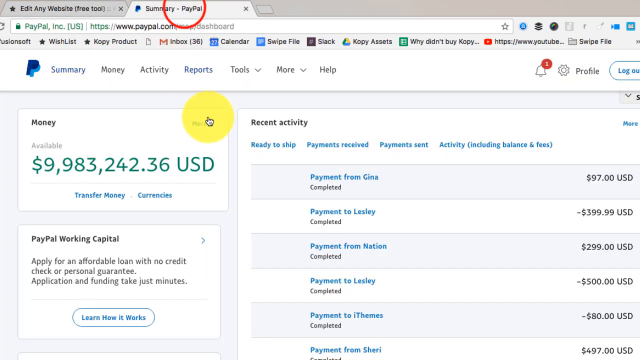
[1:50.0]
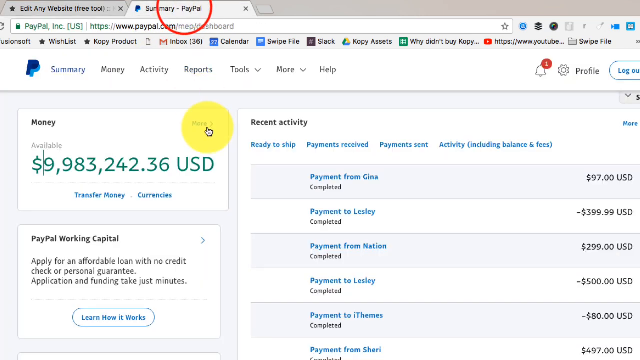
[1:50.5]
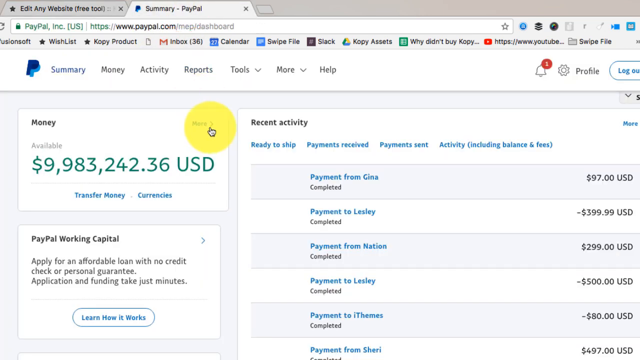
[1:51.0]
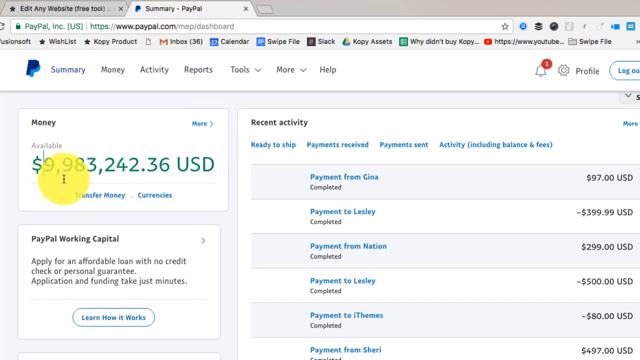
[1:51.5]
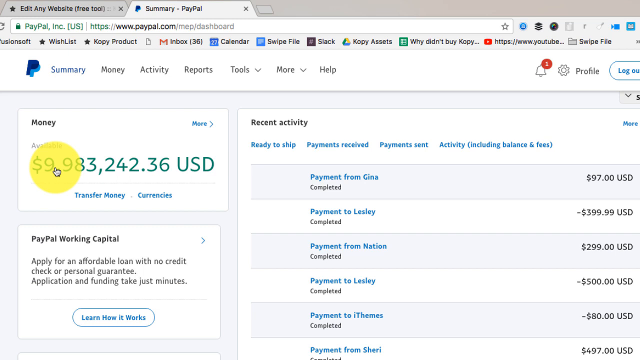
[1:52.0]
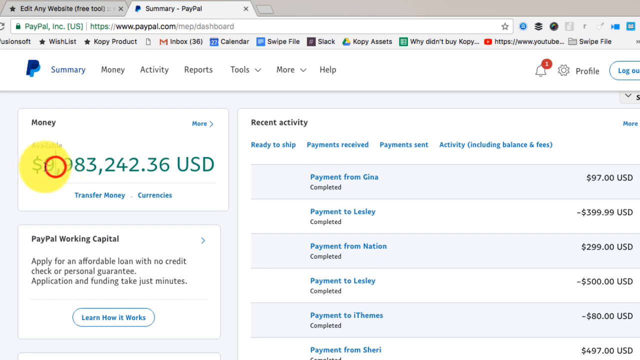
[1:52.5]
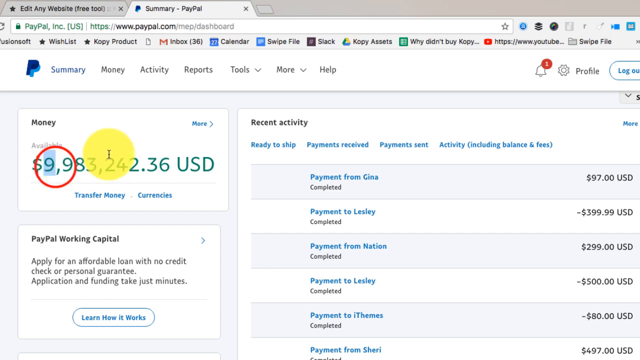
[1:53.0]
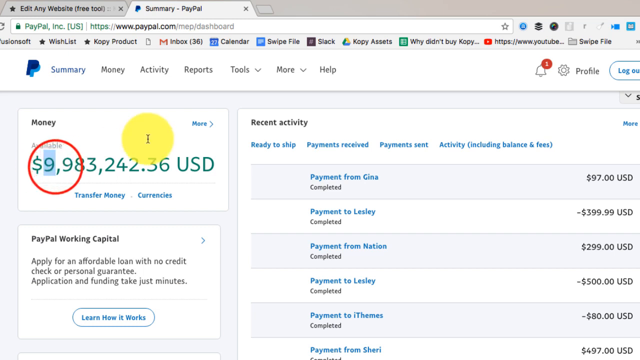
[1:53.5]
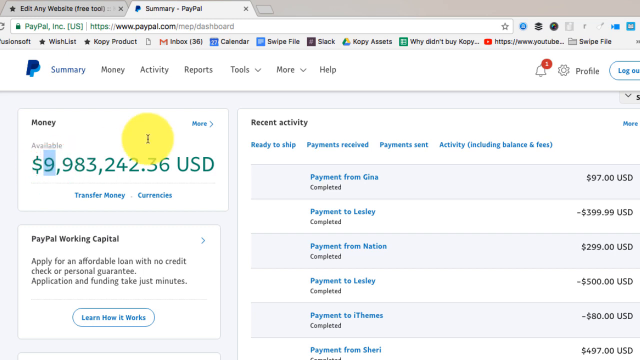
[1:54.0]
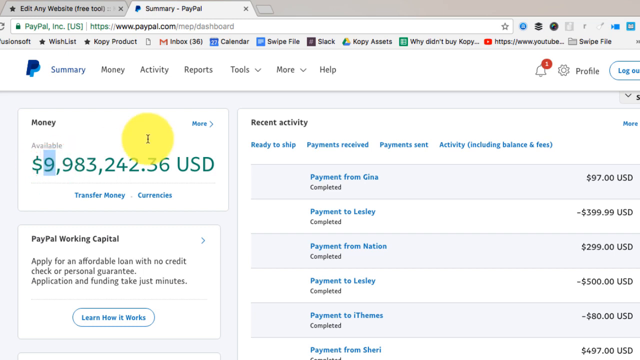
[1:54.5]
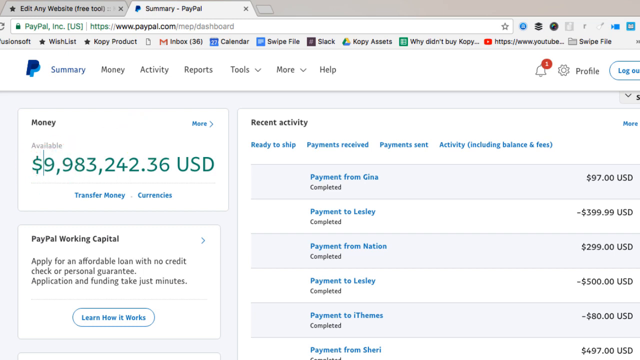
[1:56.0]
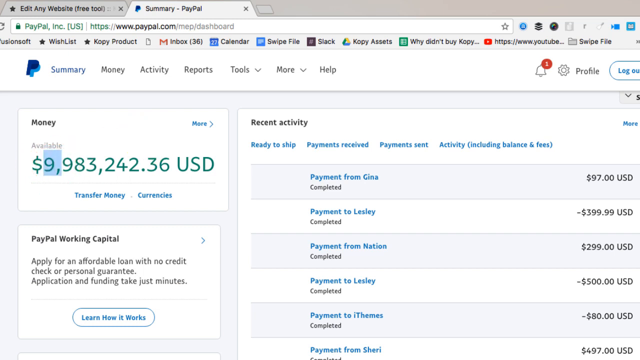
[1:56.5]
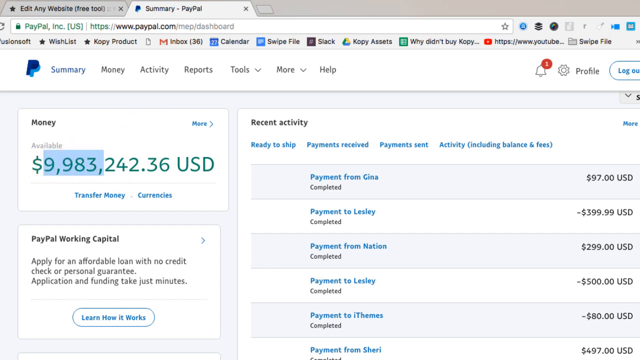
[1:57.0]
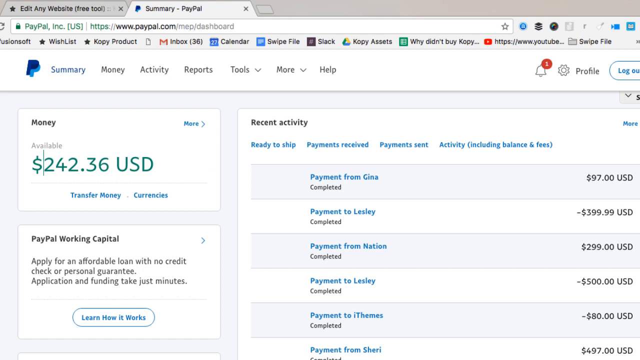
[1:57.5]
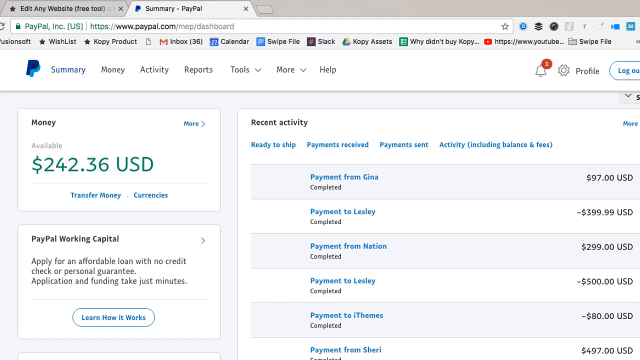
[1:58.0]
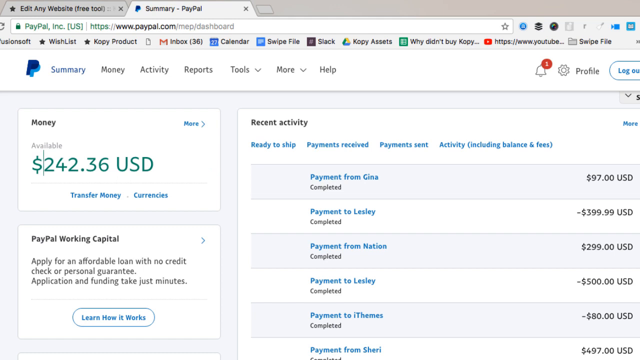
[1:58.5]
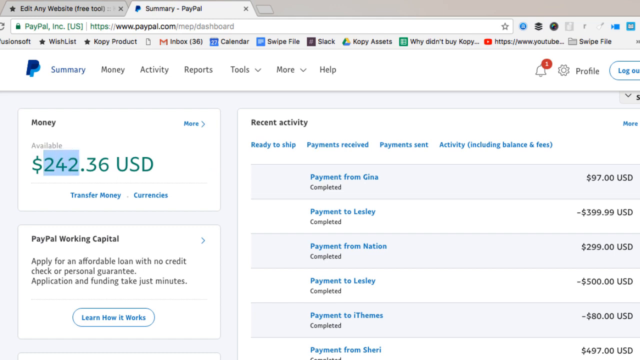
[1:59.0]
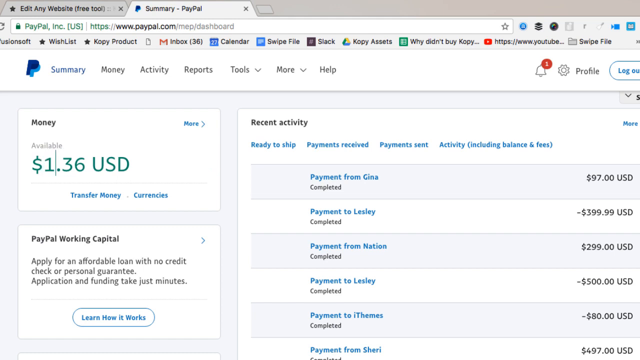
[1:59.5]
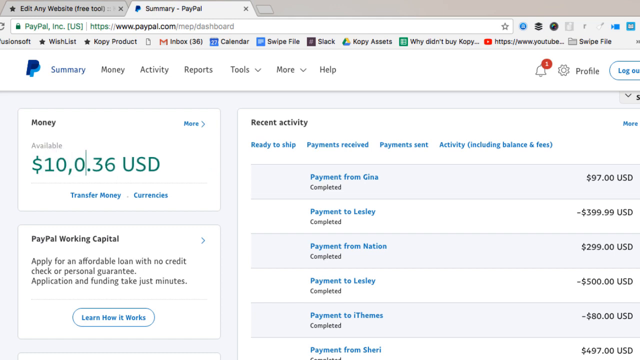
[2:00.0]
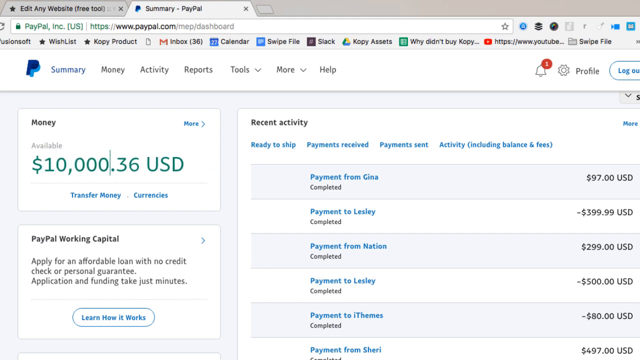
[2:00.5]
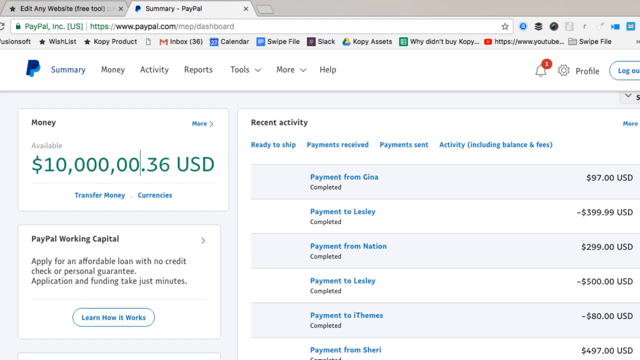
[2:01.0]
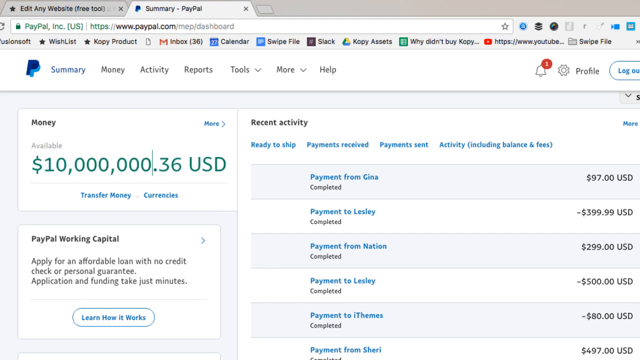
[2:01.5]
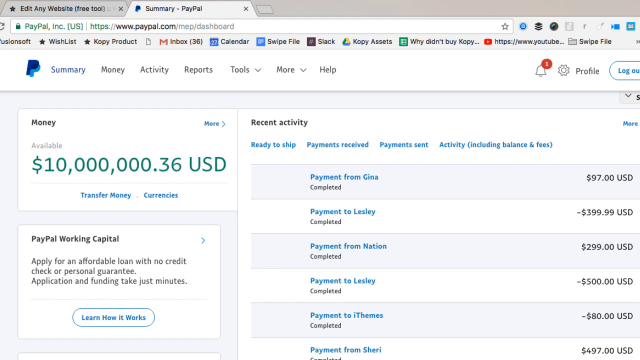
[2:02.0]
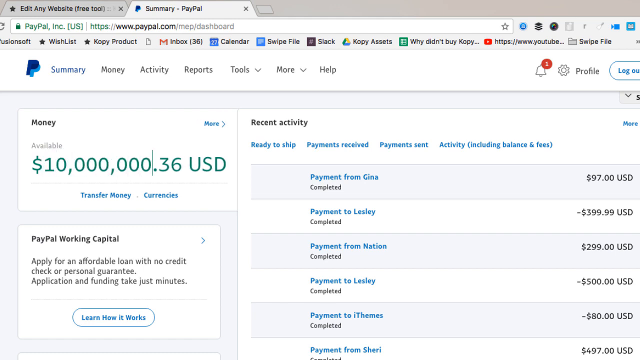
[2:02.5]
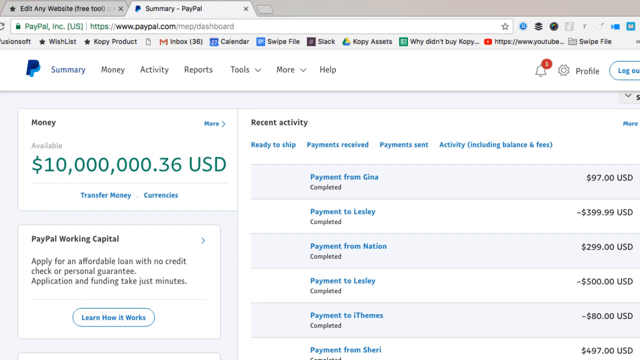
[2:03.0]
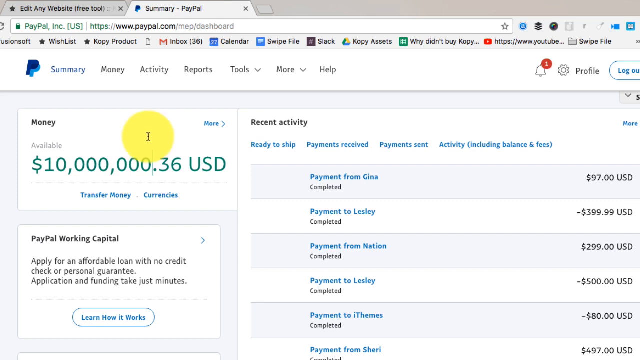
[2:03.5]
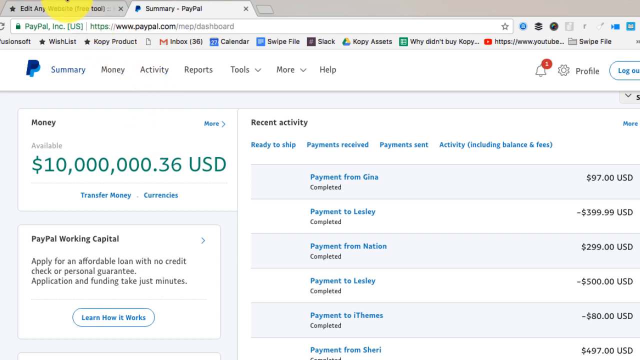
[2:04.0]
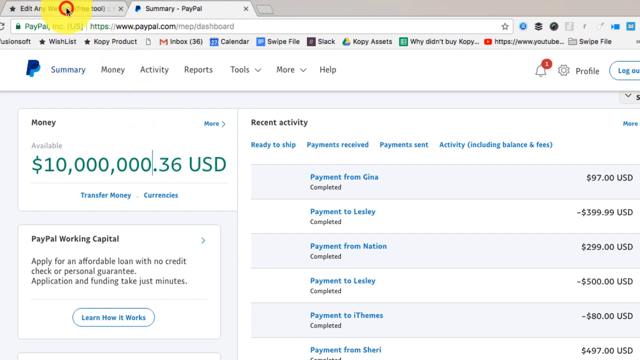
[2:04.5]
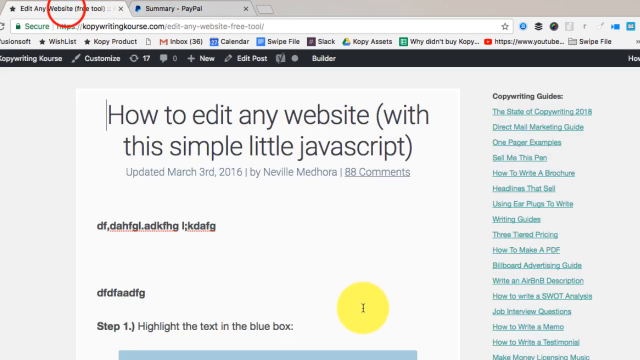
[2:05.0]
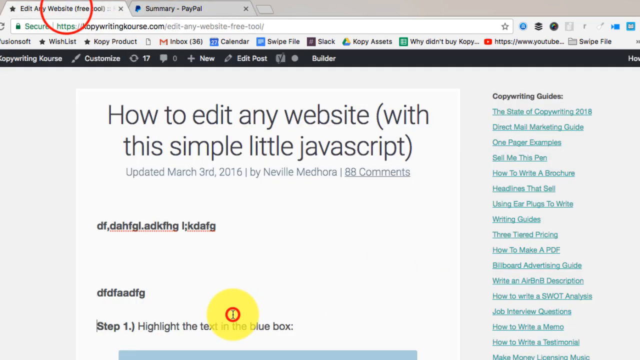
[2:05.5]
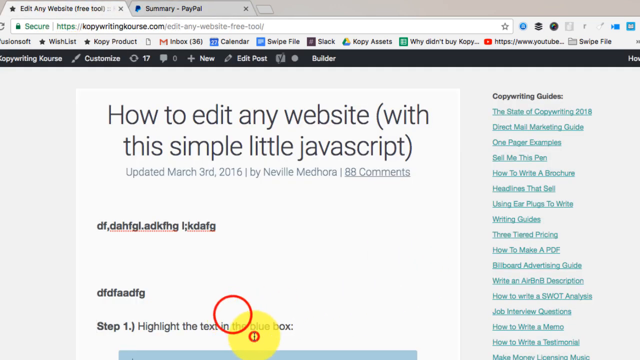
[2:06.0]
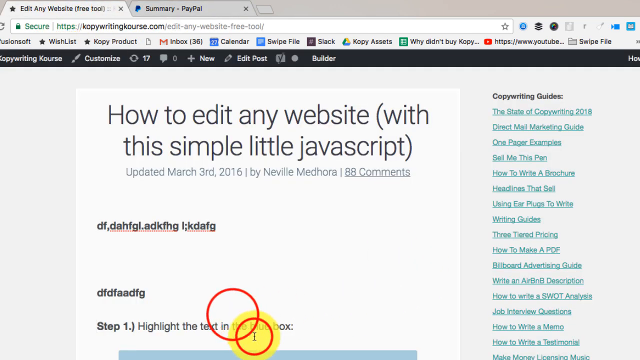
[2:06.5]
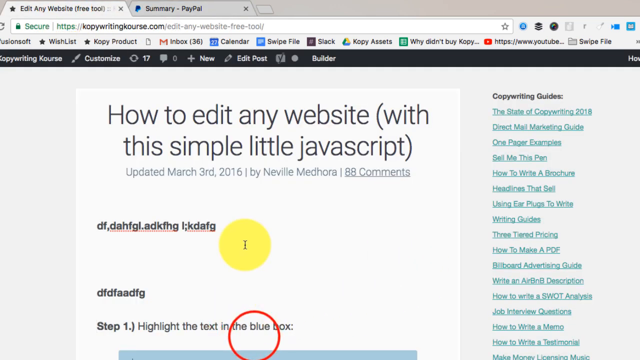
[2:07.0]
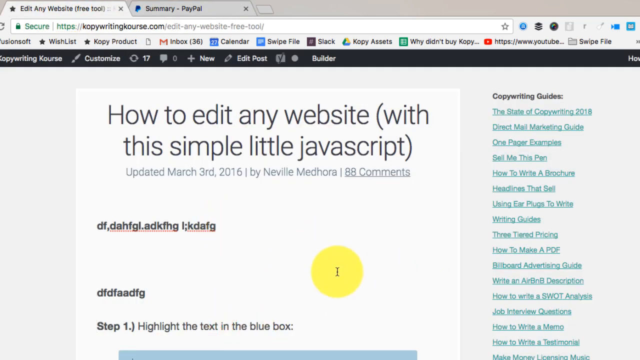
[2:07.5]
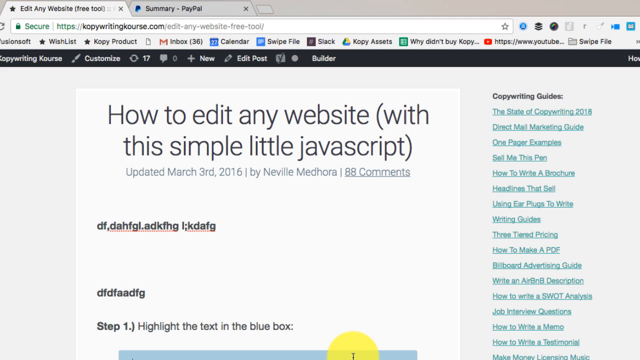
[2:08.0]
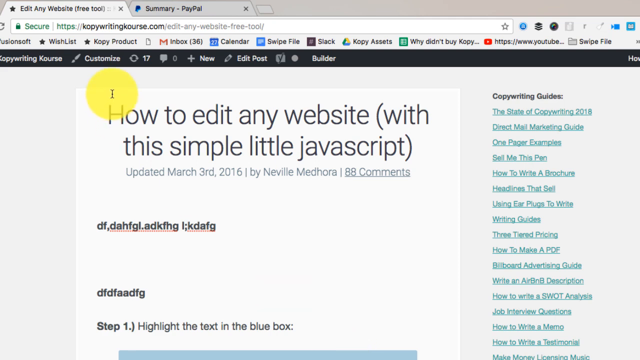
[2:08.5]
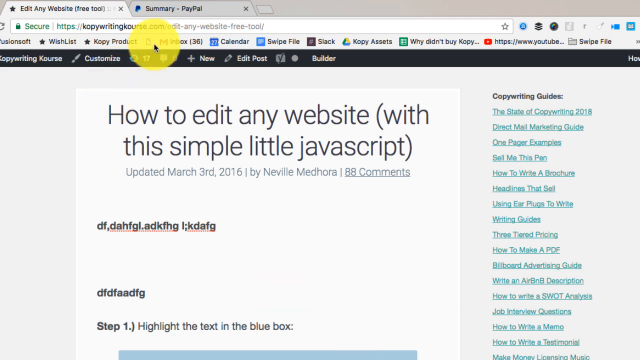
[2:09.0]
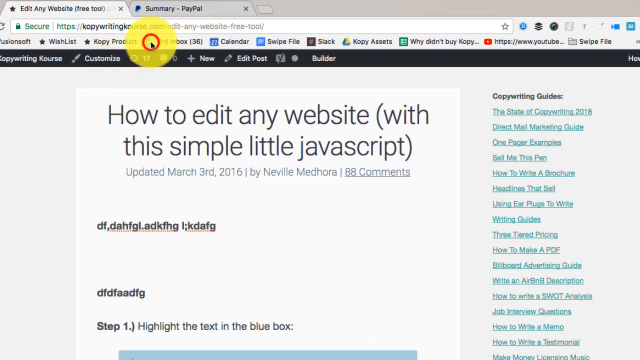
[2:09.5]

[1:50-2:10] A computer screen shows a PayPal summary page. A yellow cursor hovers around the screen and highlights the account balance, which at first is $9,983,242.36. It edits this down to $242.36, then changes it to $10,000,000.36. It then clicks on a second tab at the top of the screen for a site that says "Edit Any Website, Free Tool." On this page is a white text box with "How to edit any website (with this simple little Javascript)" typed at the top of it. The cursor, which looks like a yellow circle, moves around again. It clicks on the page icon at the top of the page, then goes back to the PayPal page, where it highlights the numbers again and changes them again, and then clicks back on the copywriting page once more.